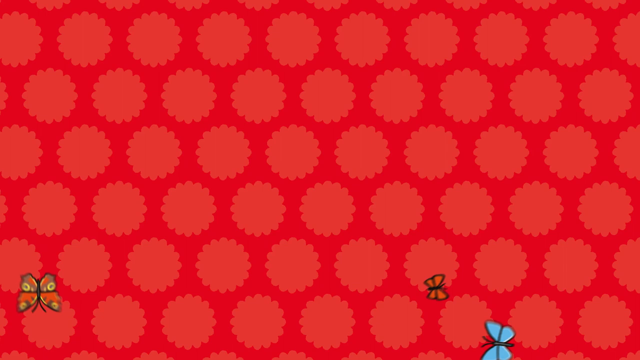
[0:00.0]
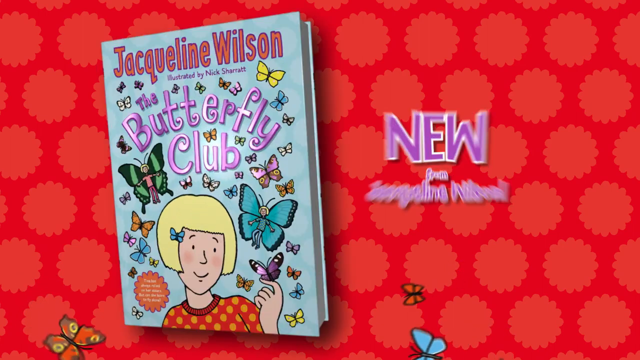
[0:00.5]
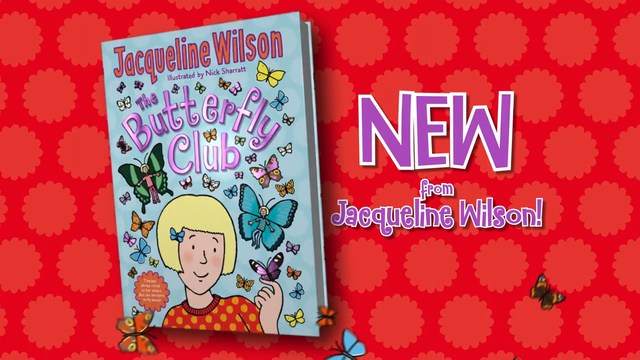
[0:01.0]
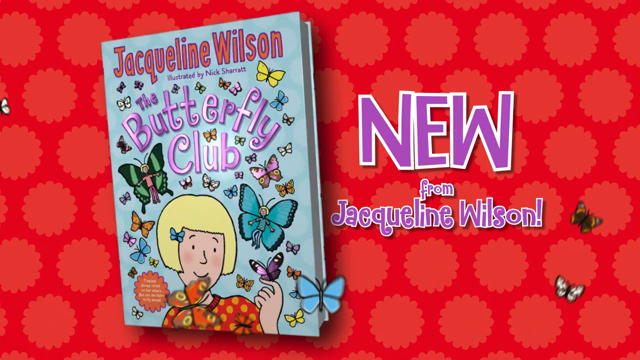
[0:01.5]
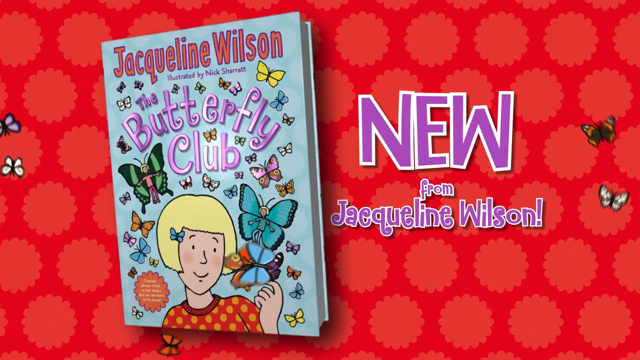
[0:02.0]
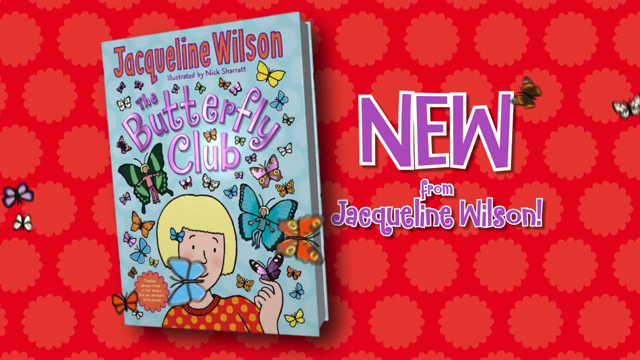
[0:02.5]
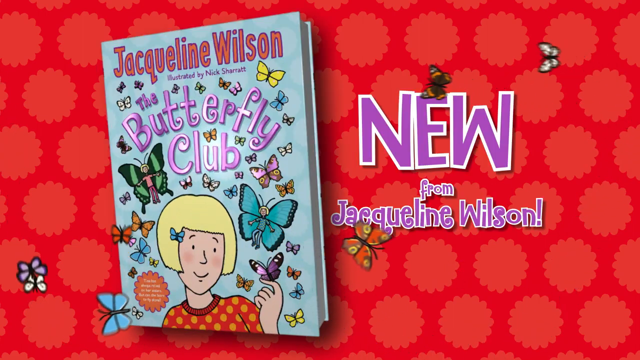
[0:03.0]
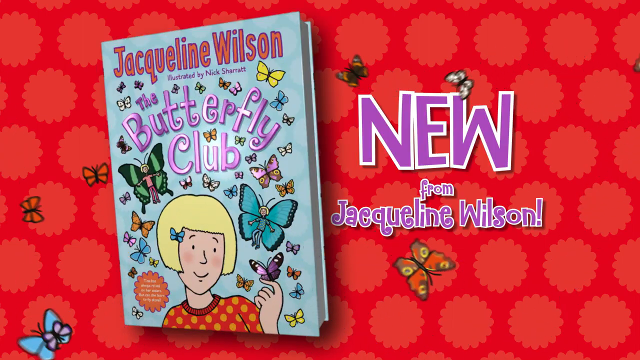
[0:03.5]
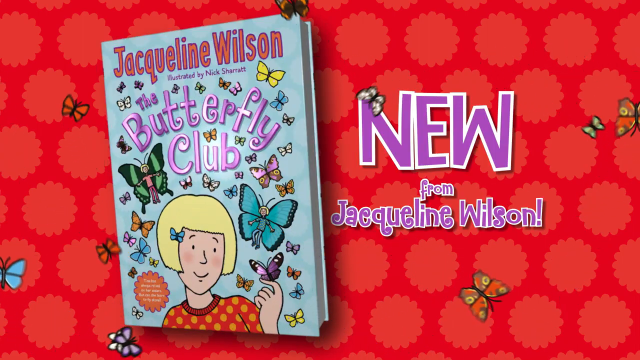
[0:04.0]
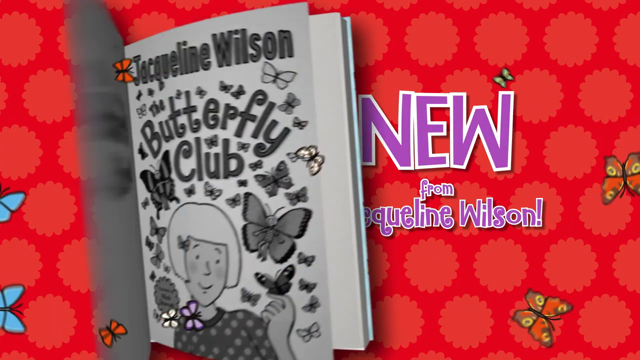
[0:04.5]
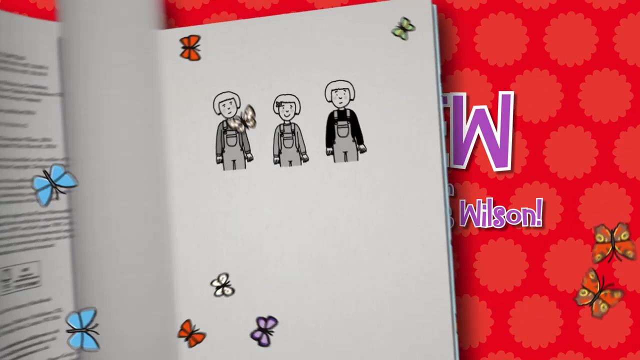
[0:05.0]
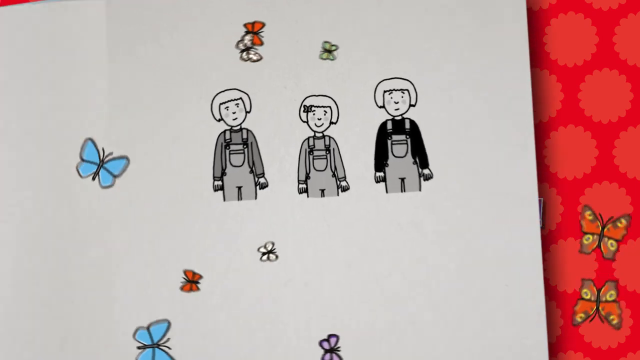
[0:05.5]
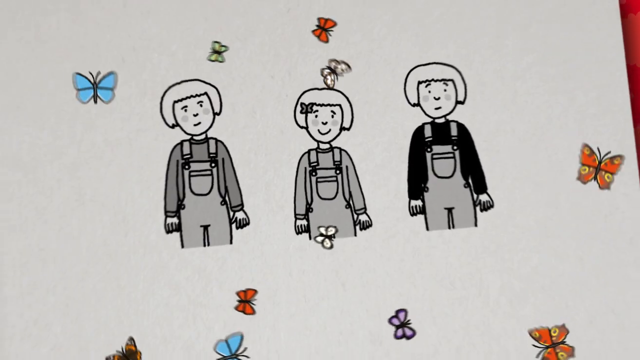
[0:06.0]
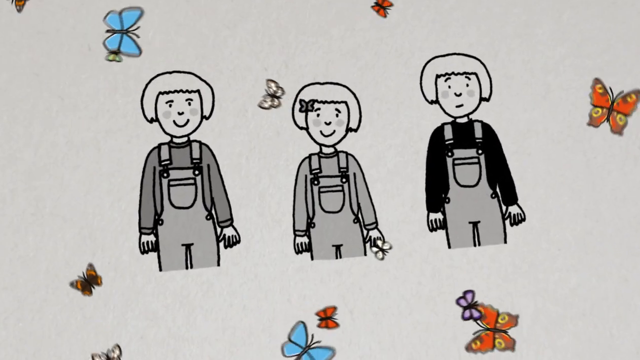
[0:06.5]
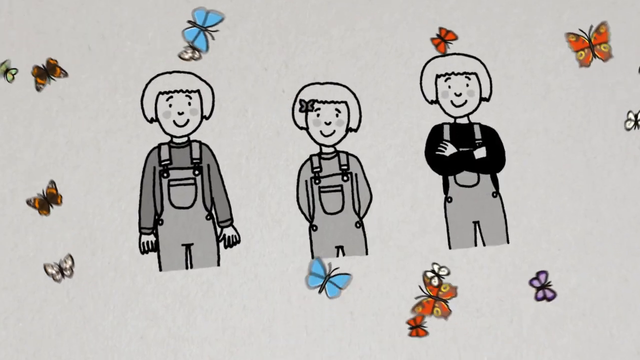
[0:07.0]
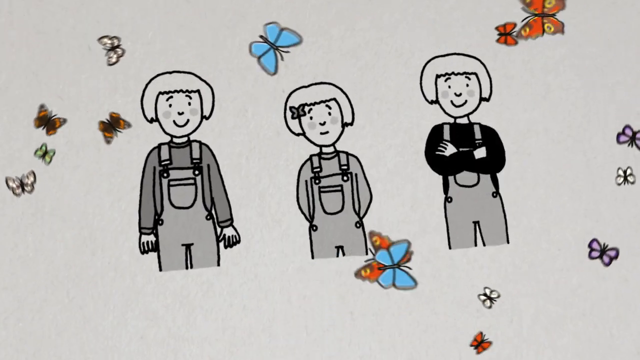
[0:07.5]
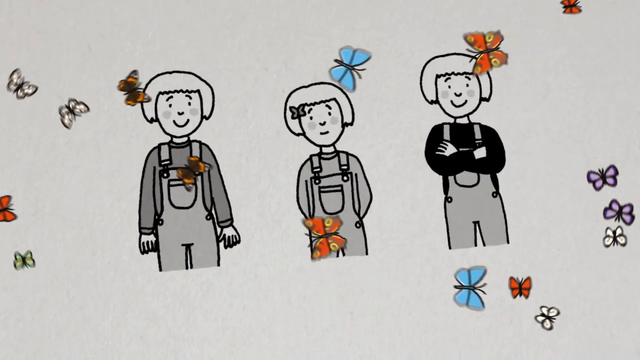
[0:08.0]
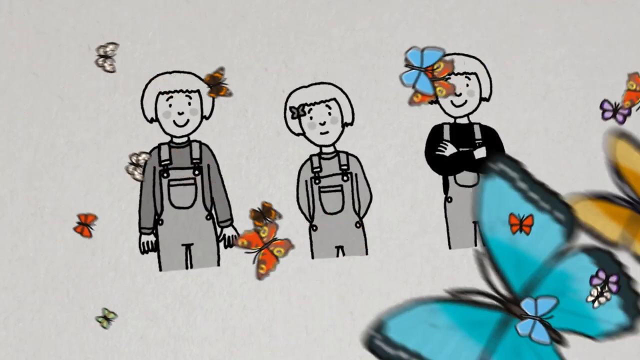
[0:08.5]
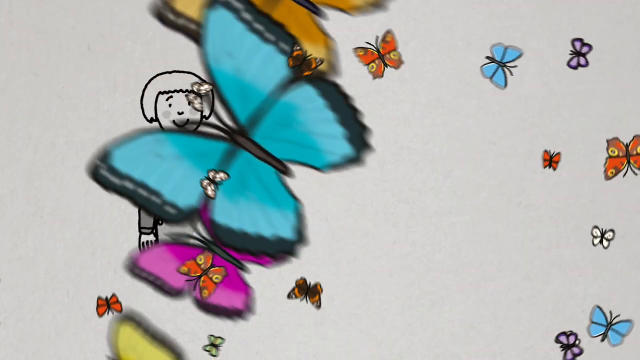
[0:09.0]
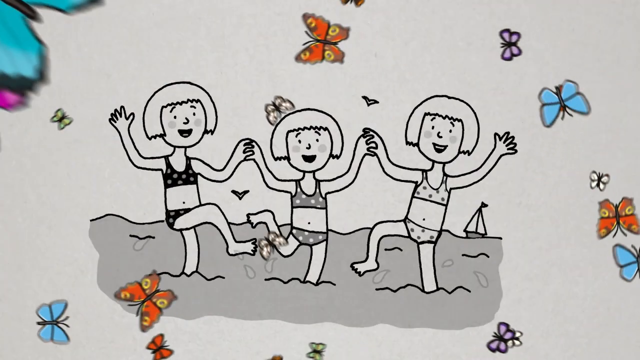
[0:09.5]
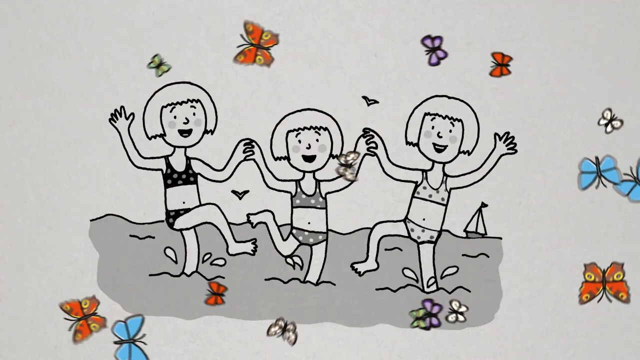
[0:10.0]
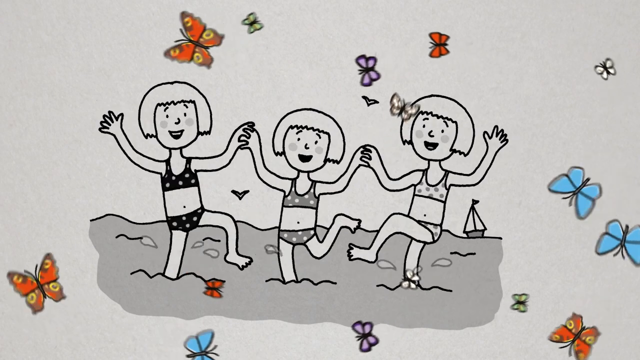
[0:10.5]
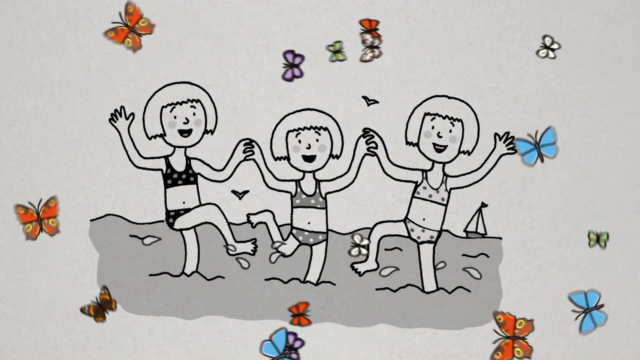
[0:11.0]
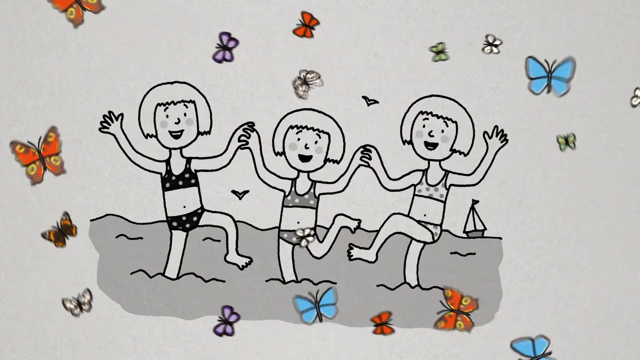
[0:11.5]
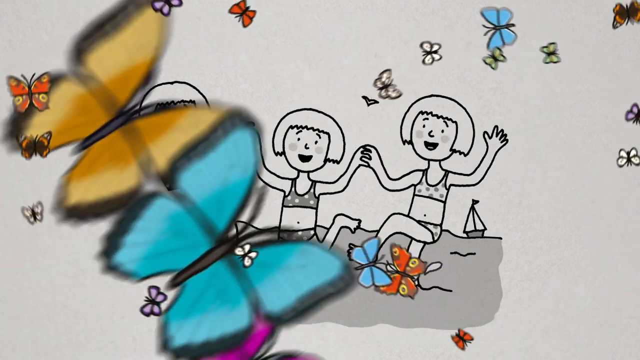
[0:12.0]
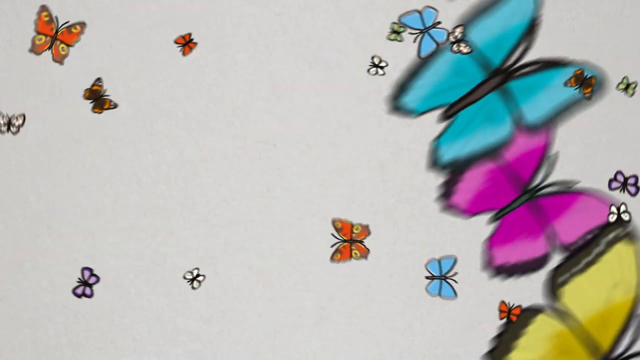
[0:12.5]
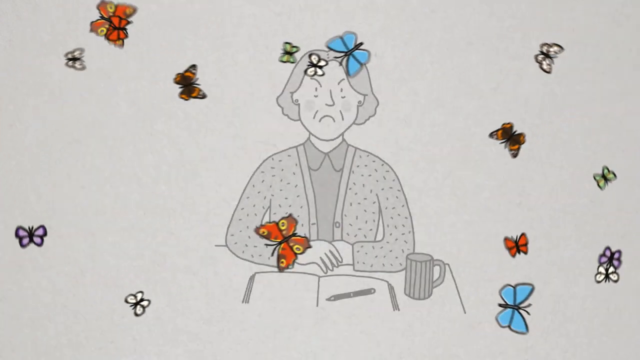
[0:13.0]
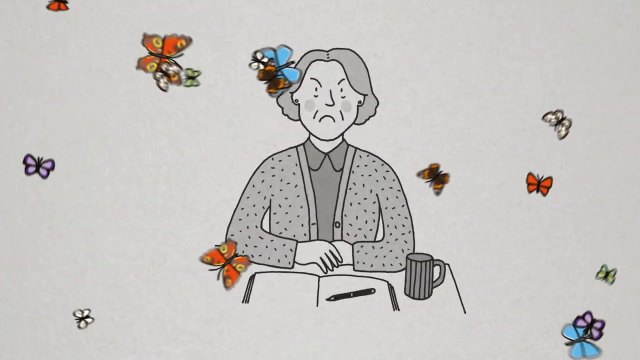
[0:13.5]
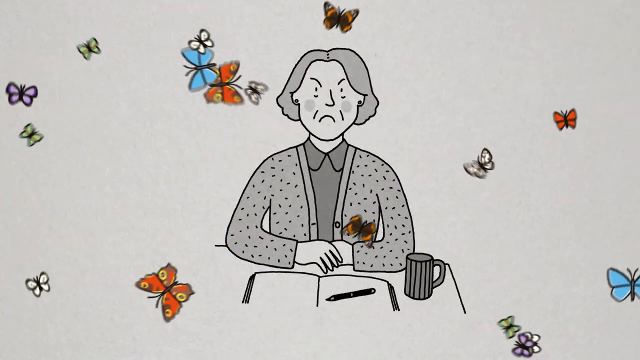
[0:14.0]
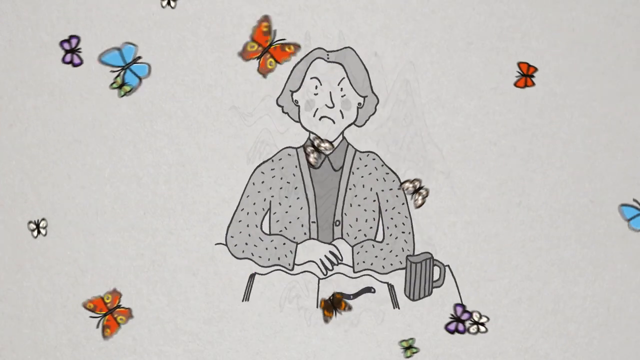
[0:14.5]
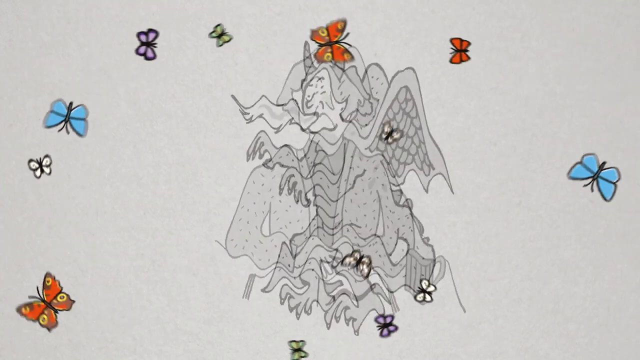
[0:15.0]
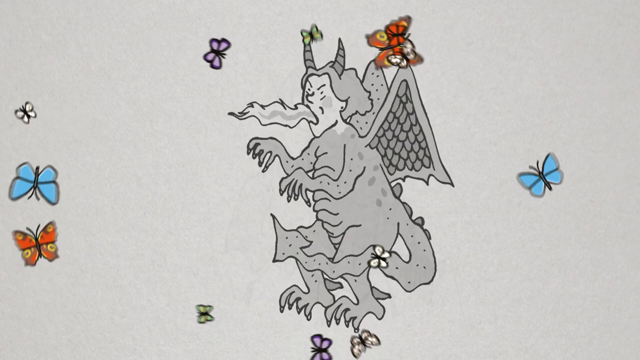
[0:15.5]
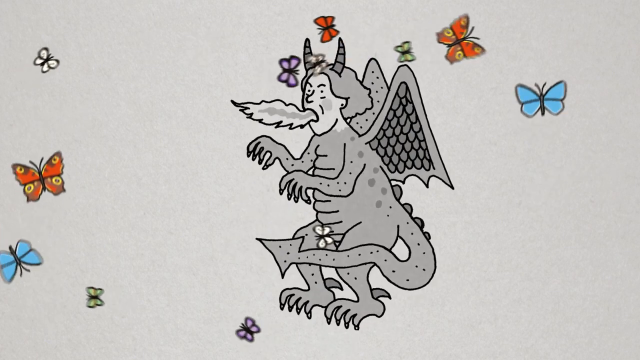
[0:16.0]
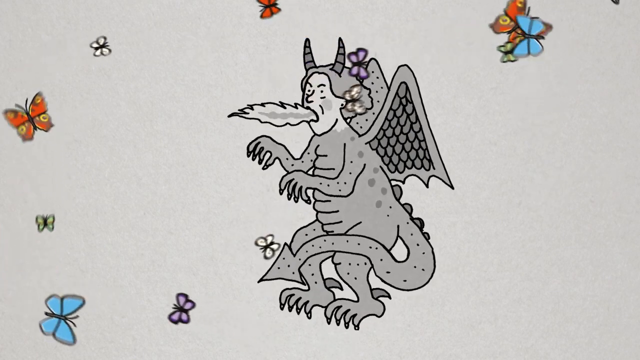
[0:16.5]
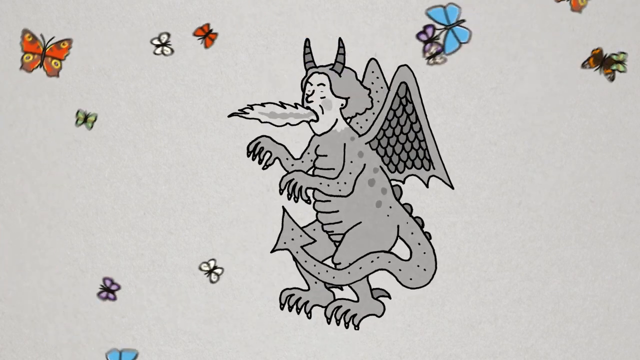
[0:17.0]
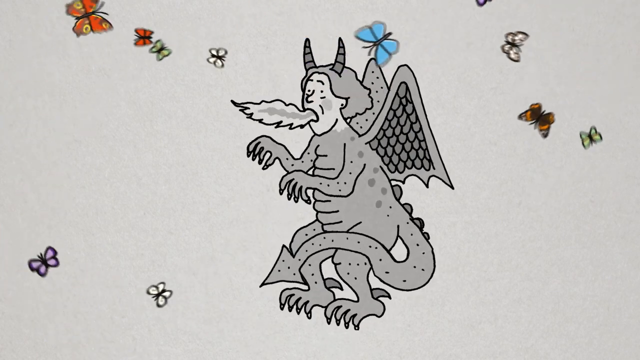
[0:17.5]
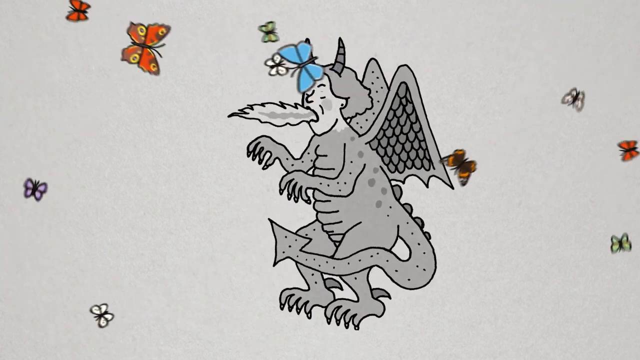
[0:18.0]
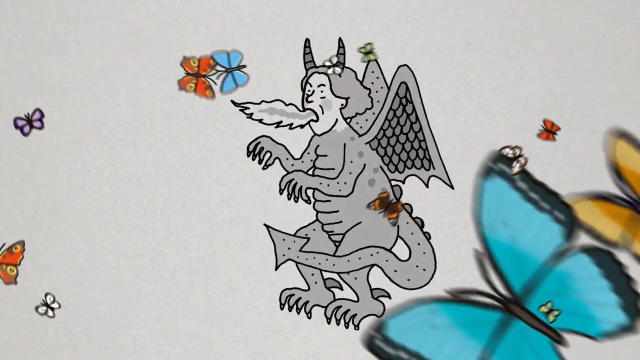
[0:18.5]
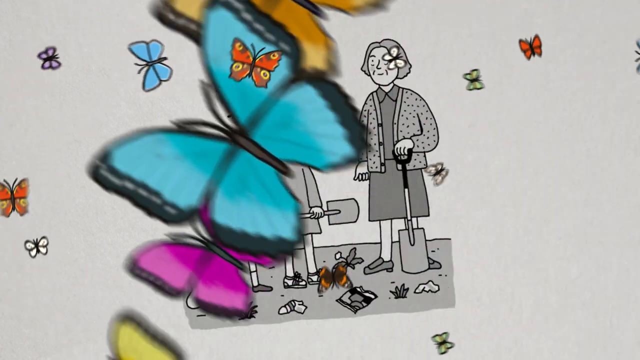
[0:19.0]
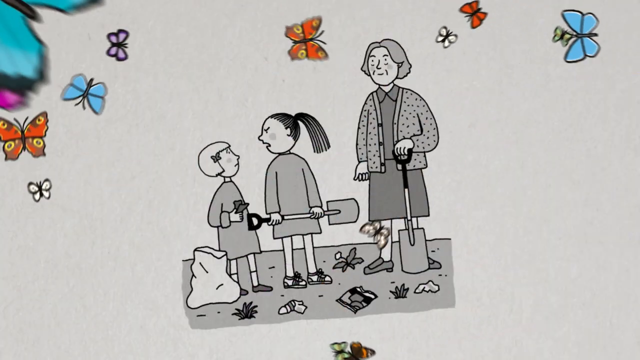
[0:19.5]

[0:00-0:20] The video features the butterfly book by Jacqueline Wilson, which is called Butterfly Club and presented as new from Jacqueline Wilson. Three children jump and play while butterflies in blue, black, purple, orange and white fly around them. A gray dragon appears, along with three people: one elder and two children. Three children are also shown jumping in mud and water, in black and white. An old lady is seated and appears not to be happy.